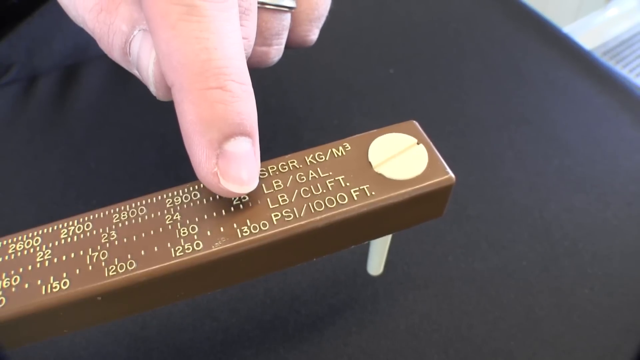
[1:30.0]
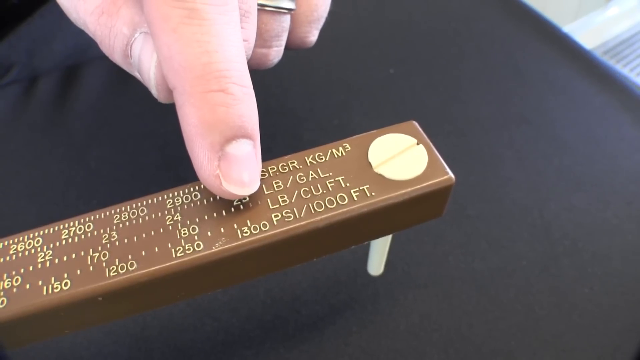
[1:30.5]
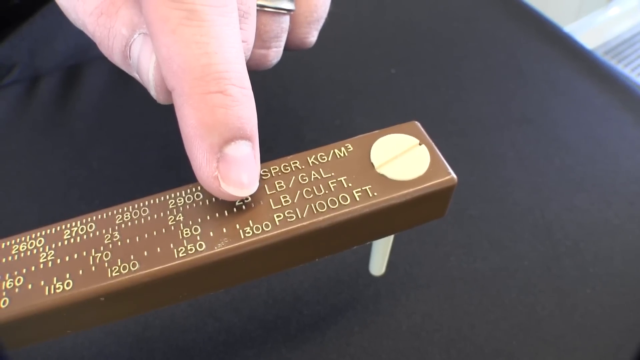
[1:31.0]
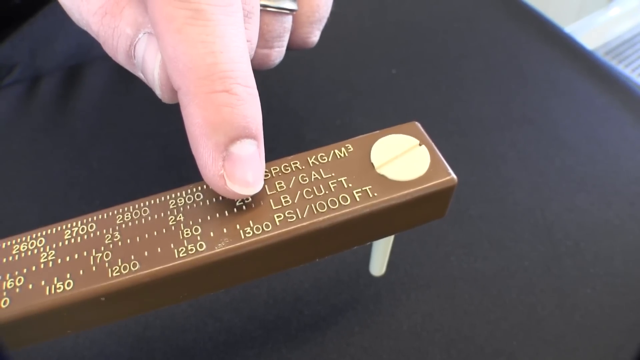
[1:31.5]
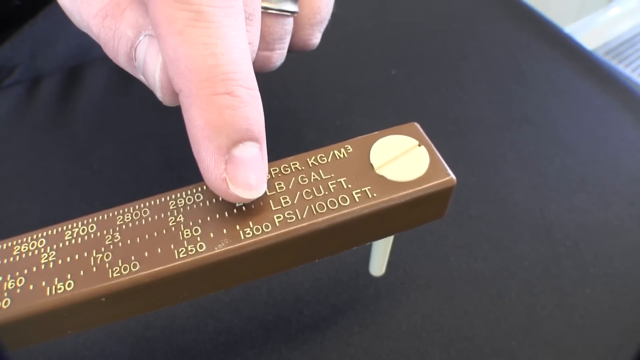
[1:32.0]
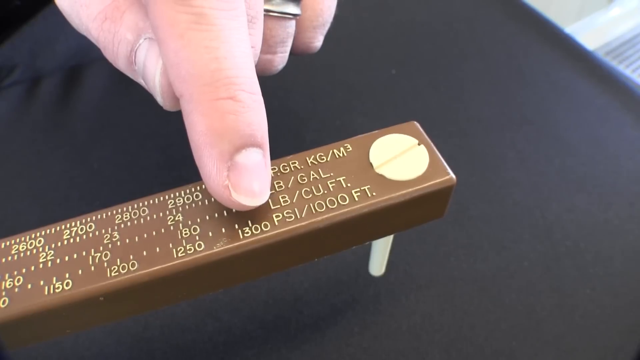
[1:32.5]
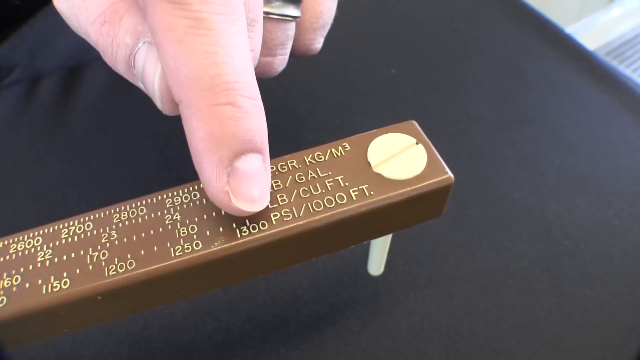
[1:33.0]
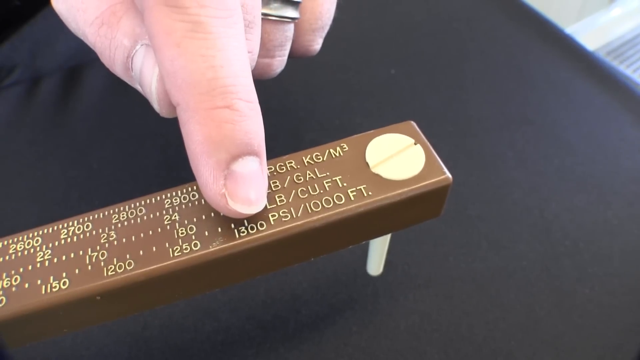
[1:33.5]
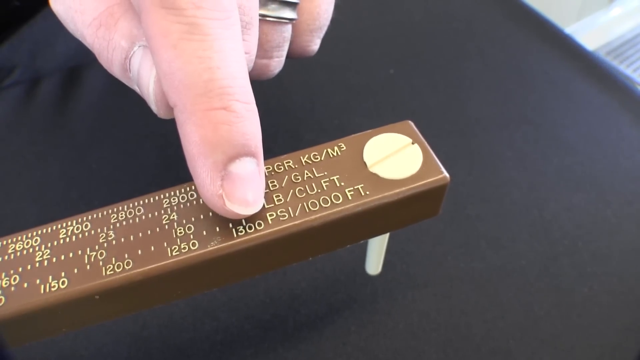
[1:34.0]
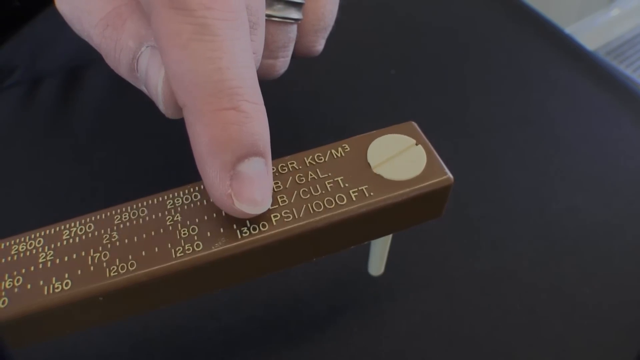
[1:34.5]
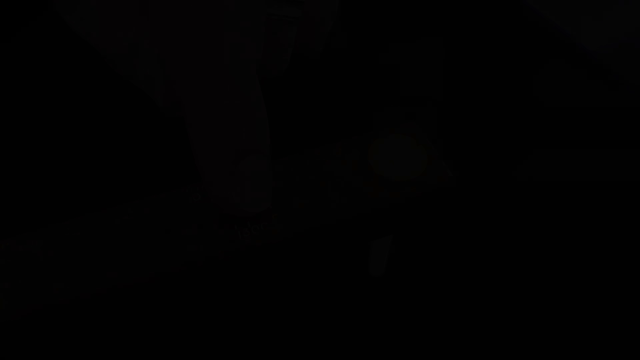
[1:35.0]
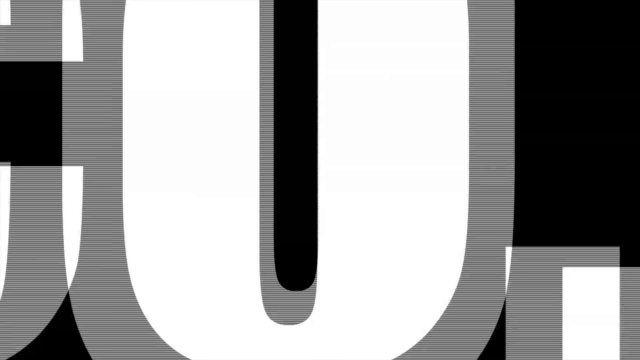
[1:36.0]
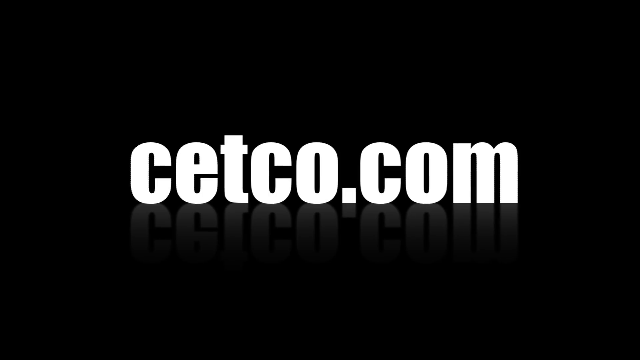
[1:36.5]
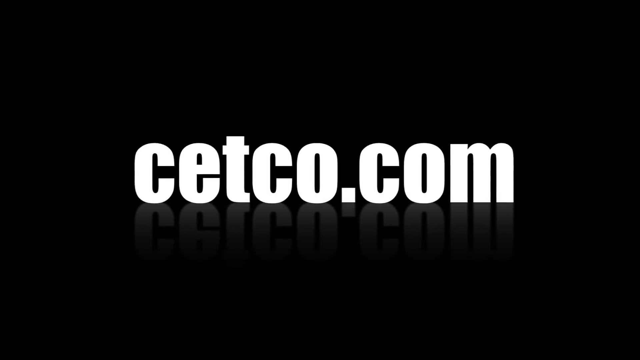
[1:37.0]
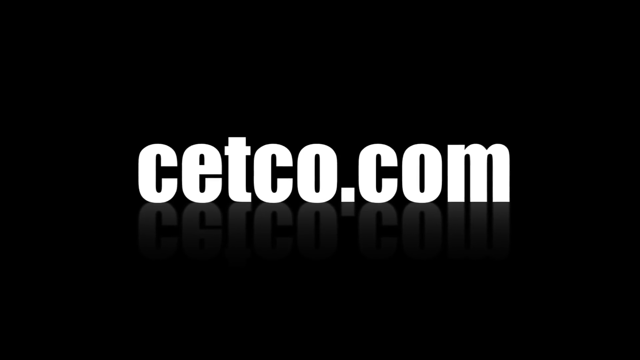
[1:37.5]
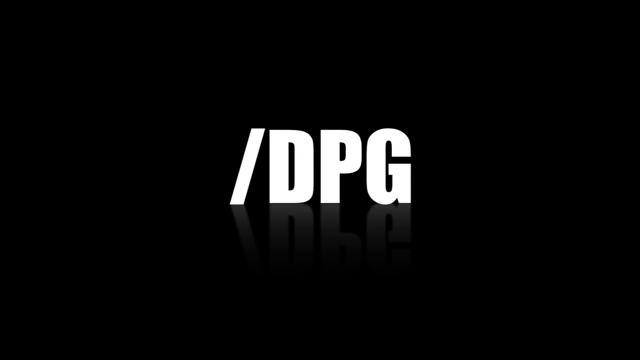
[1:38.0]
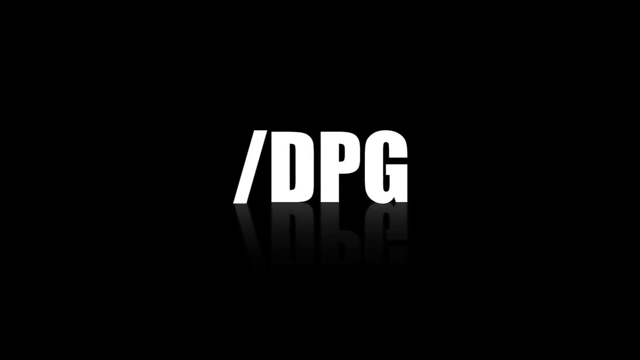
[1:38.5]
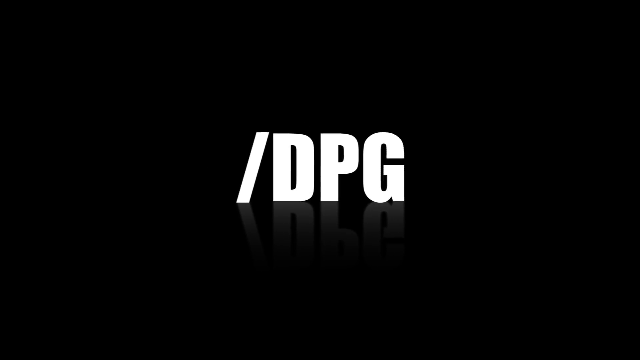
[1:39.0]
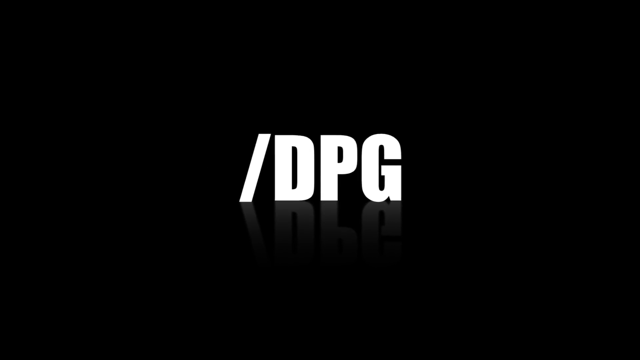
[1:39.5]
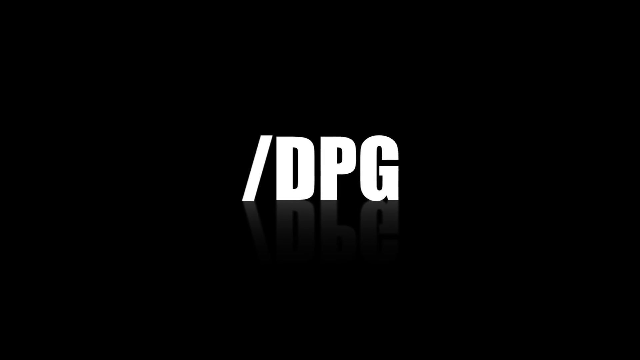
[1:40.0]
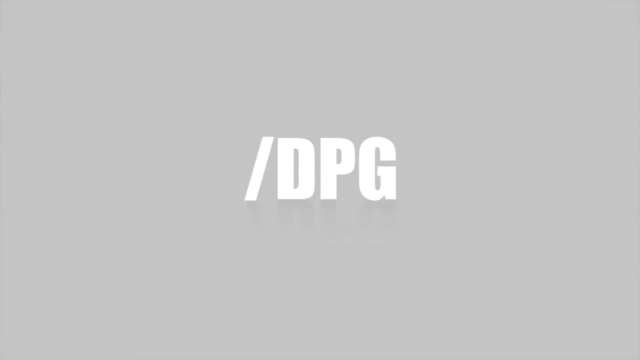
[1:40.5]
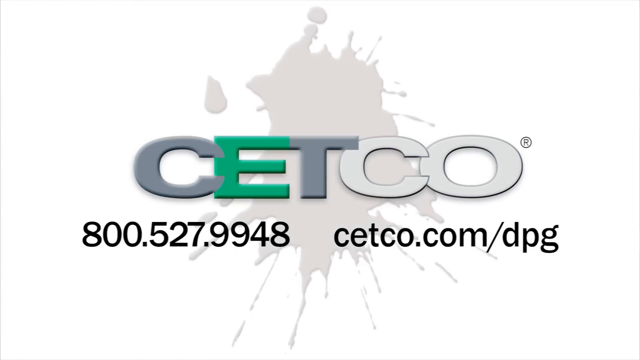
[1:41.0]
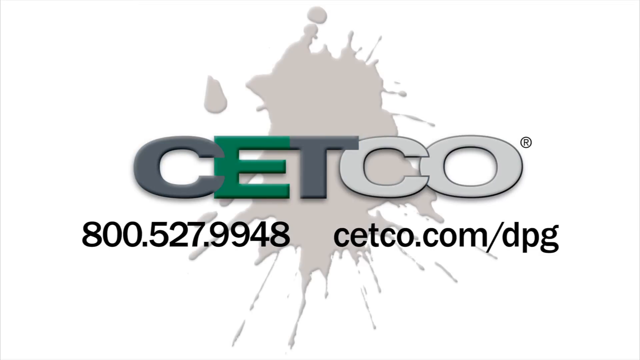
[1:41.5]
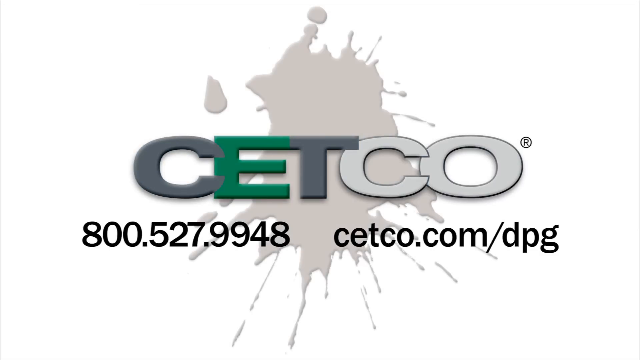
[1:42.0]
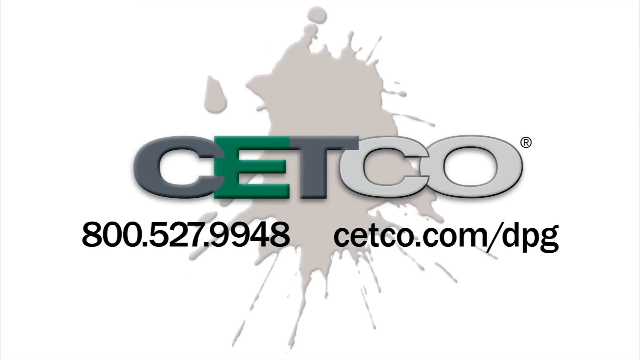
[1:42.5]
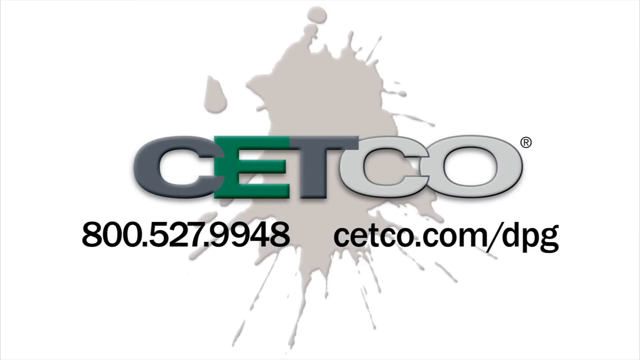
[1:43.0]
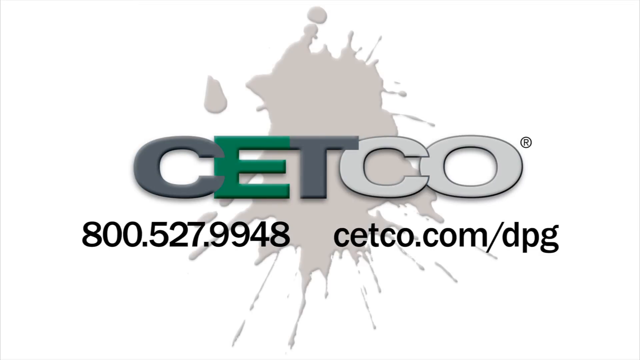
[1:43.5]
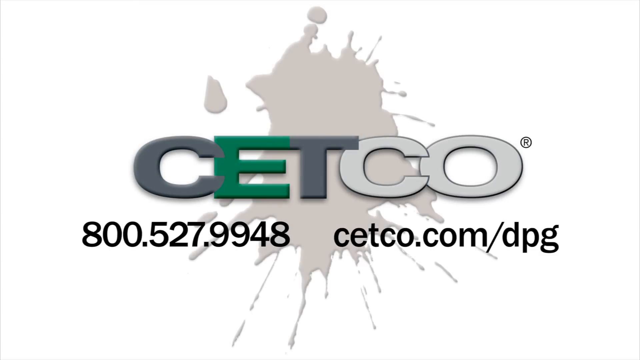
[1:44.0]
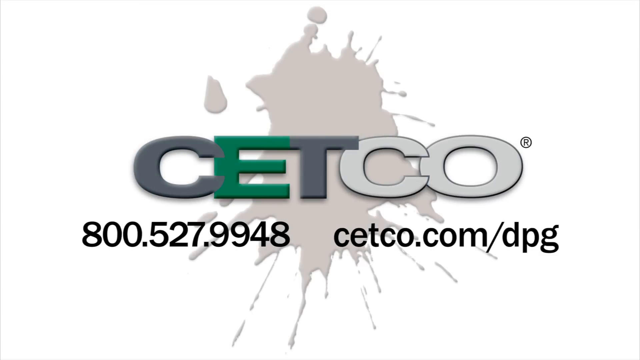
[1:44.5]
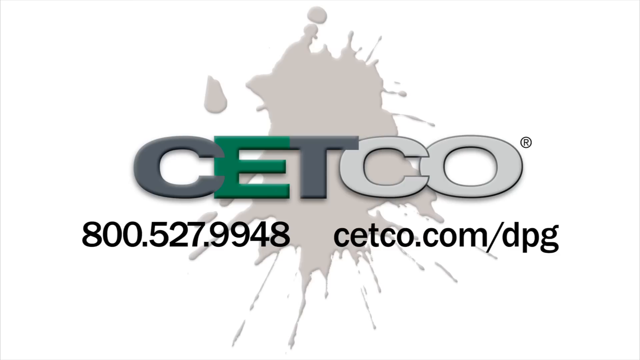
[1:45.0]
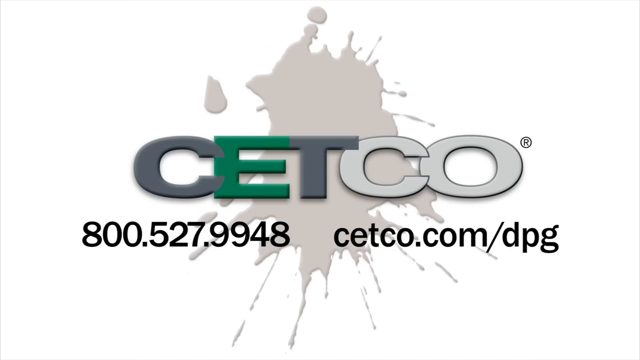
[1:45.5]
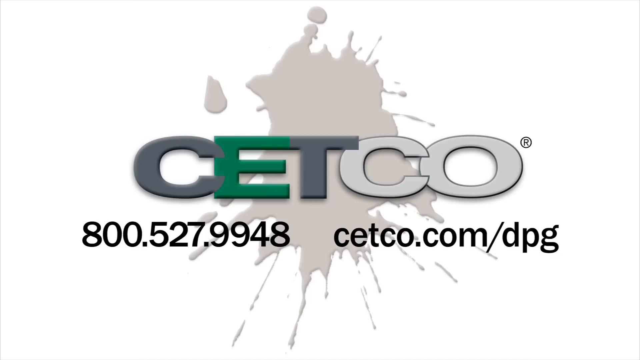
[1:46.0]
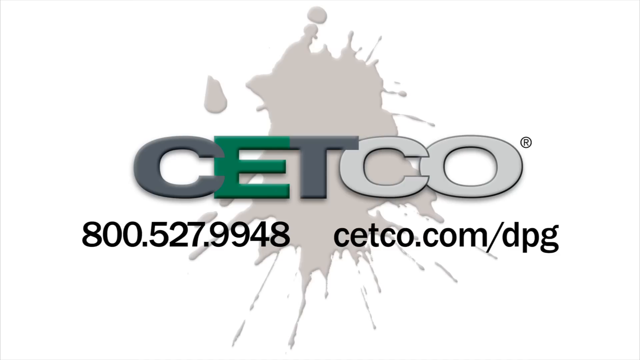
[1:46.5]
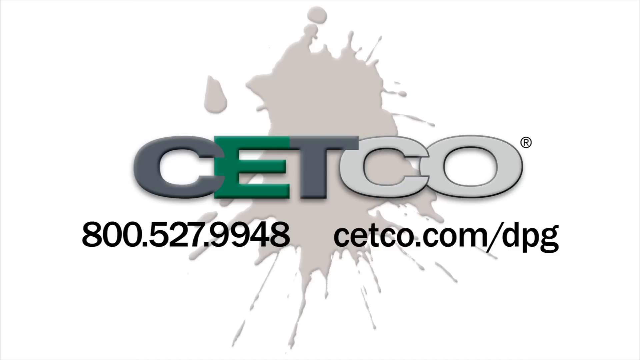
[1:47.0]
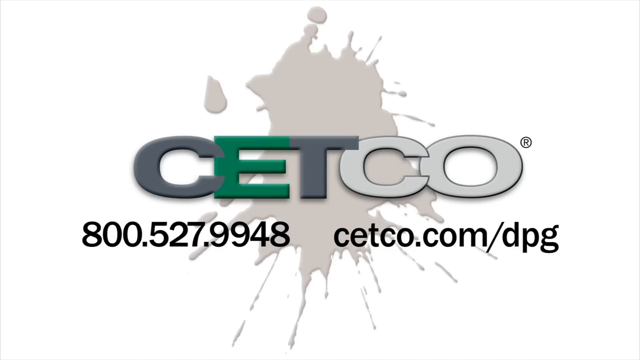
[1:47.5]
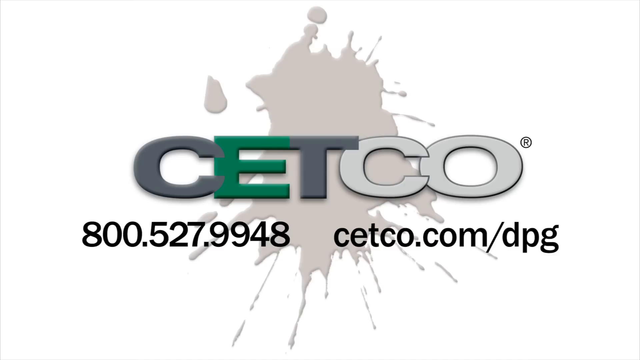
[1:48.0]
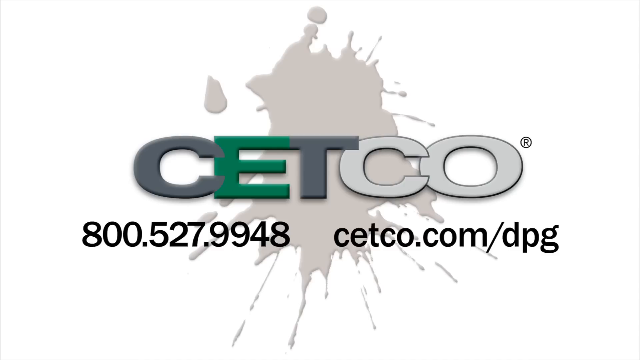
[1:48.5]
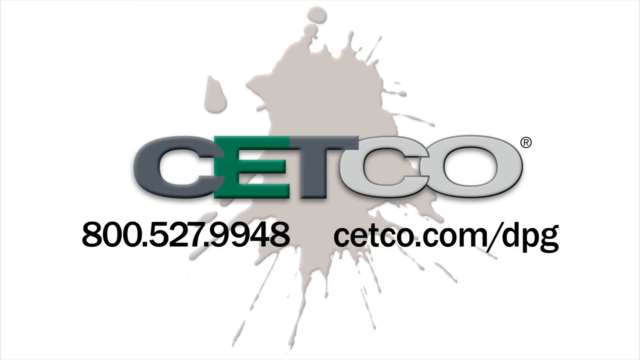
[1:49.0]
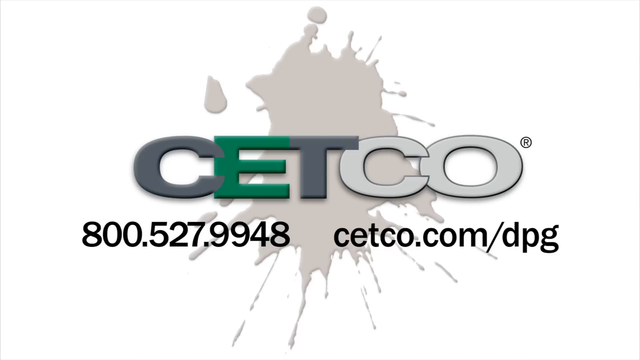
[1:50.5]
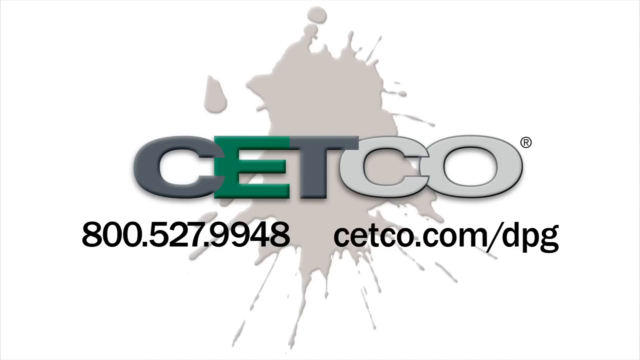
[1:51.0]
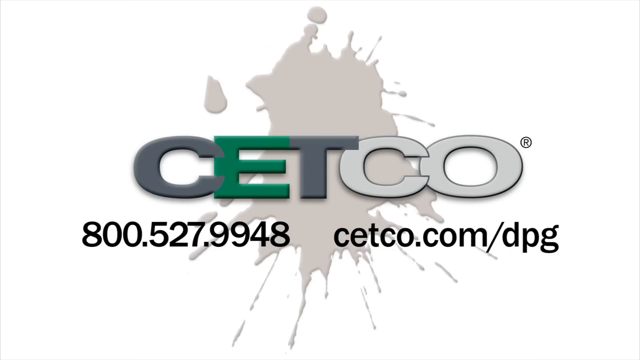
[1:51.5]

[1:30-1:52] With the apparatus balanced, the person points at the other end of the apparatus, which shows the maximum measurements; the maximum looks like 1300 psi per 1,000 foot. The video fades out to a screen advertising the website "cetco.com" in solid white block letters on a black background, followed by "/TPG". The CETCO logo then appears again, with the E green, the C and T gray and the CO white, on a white background with a splash of mud in the background. A phone number and the website are also shown. The video advertises an apparatus that measures the density or weight of a mud solution.